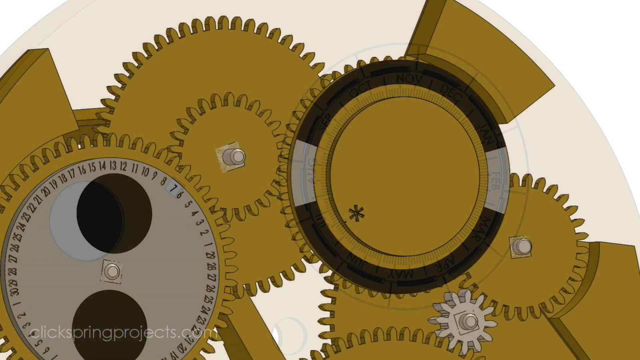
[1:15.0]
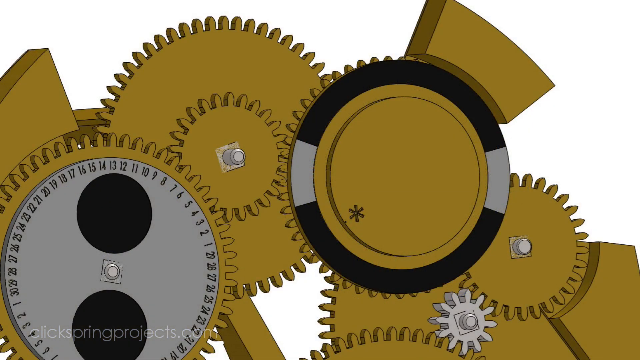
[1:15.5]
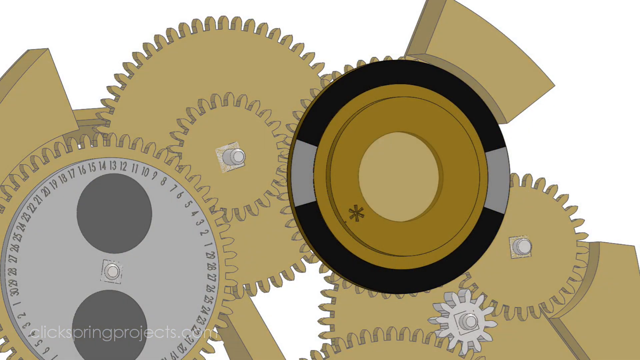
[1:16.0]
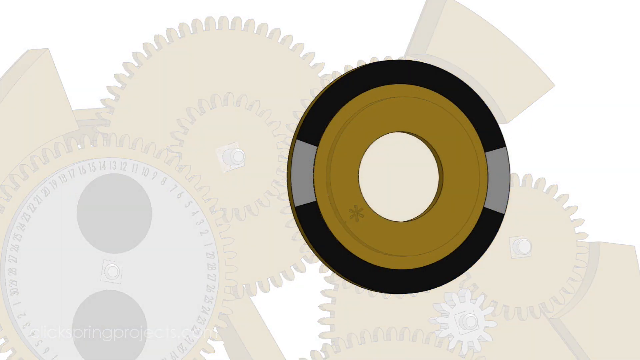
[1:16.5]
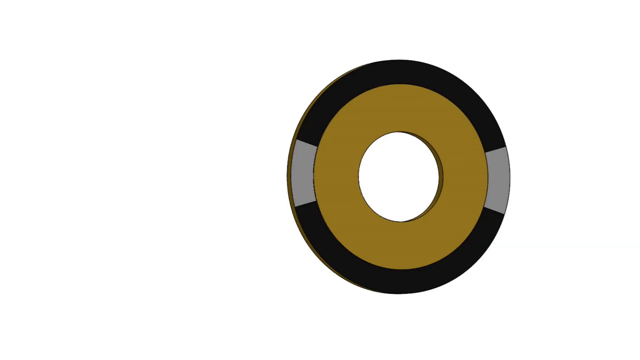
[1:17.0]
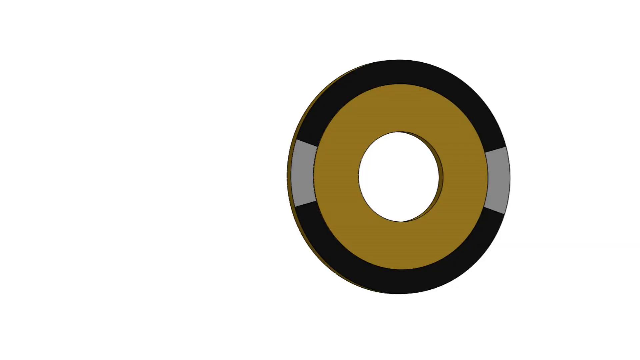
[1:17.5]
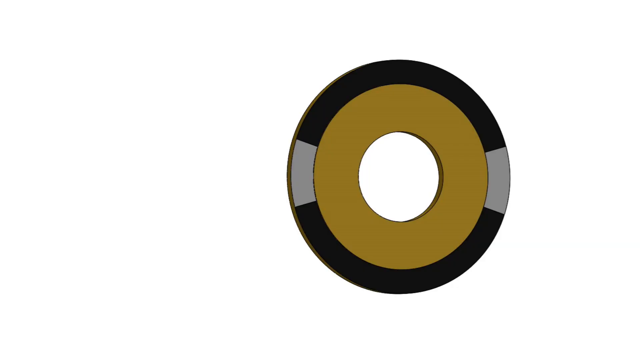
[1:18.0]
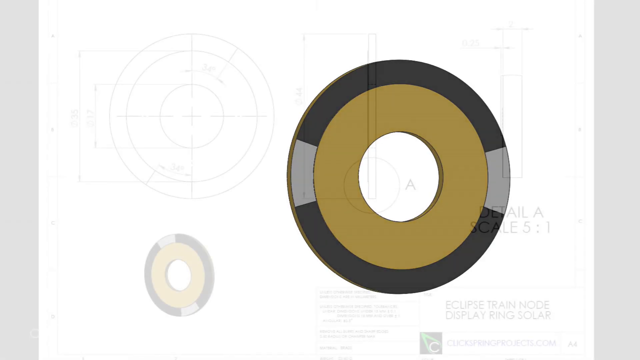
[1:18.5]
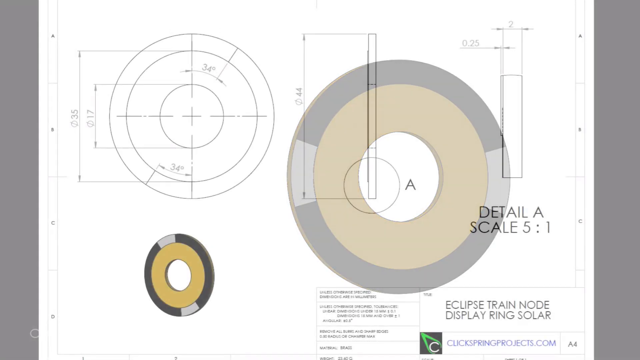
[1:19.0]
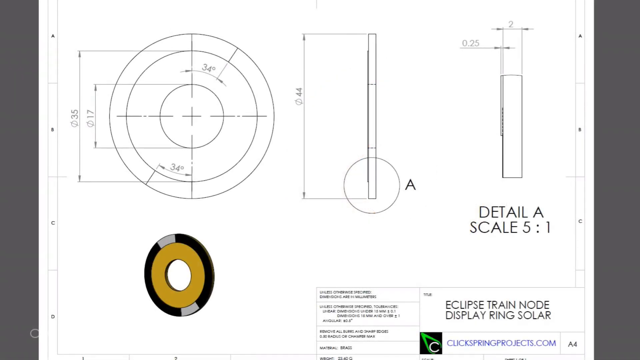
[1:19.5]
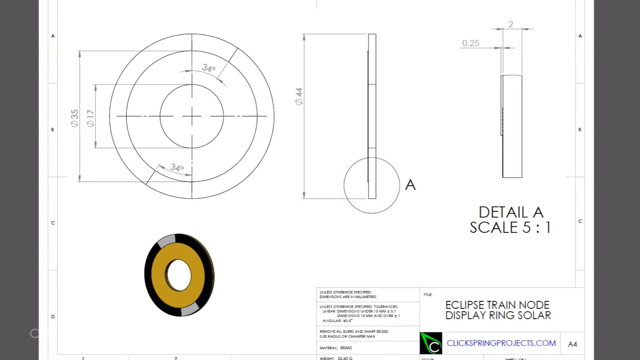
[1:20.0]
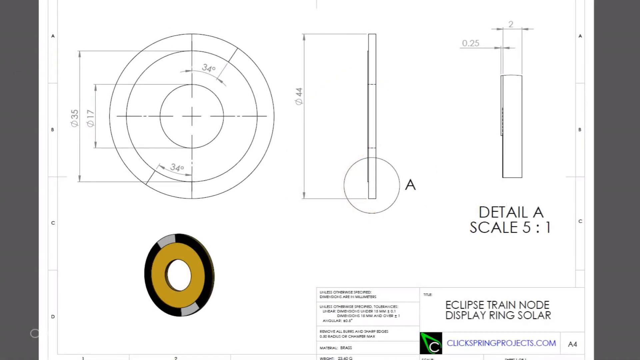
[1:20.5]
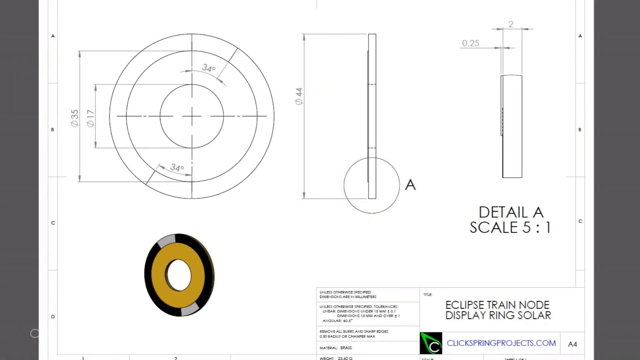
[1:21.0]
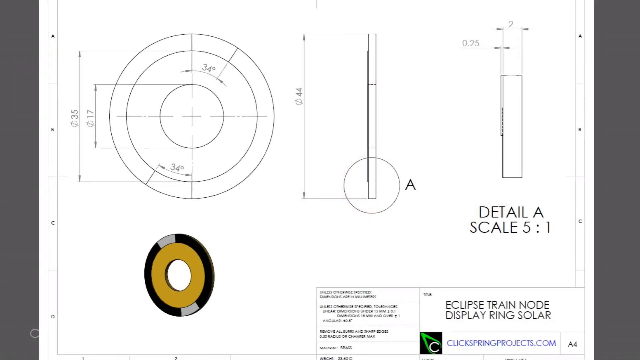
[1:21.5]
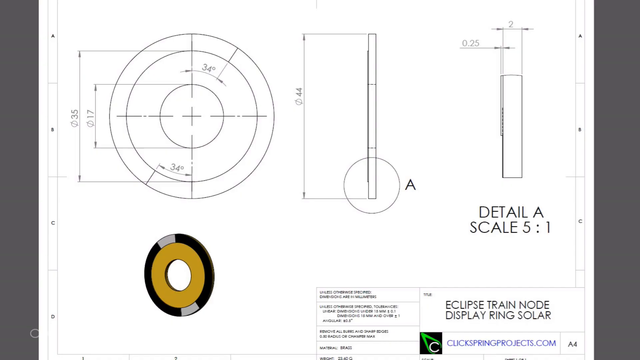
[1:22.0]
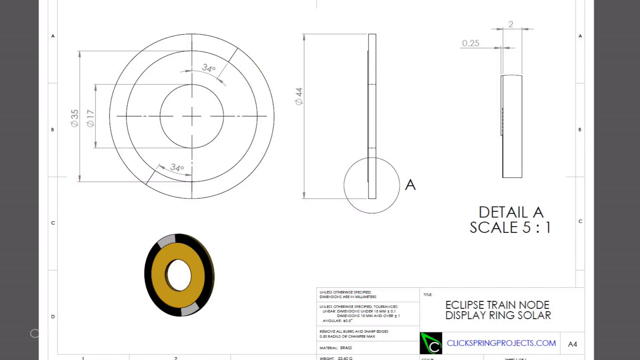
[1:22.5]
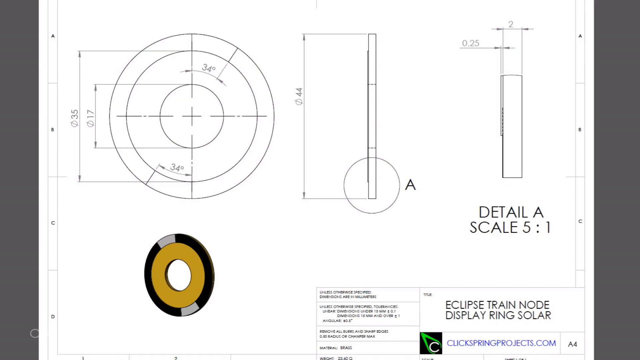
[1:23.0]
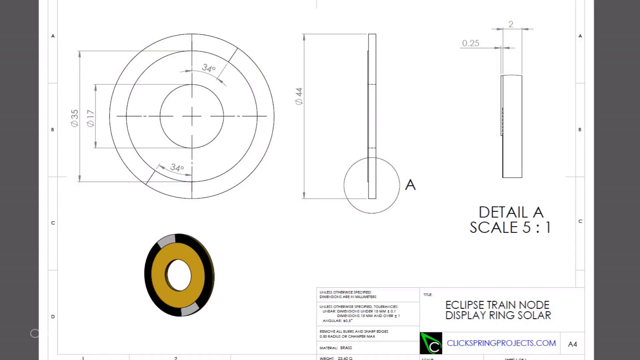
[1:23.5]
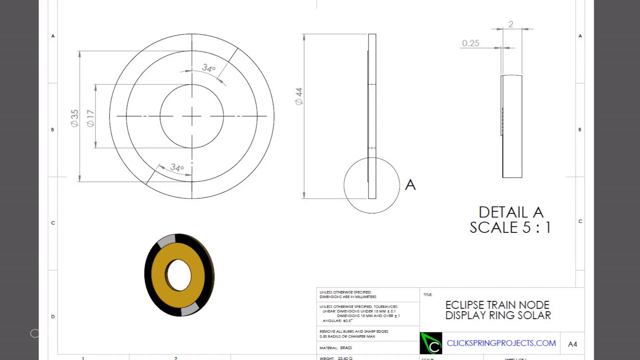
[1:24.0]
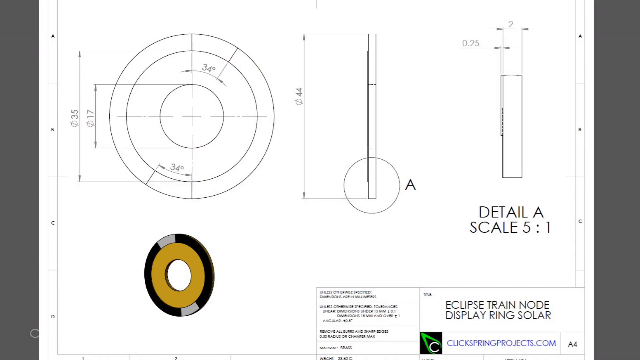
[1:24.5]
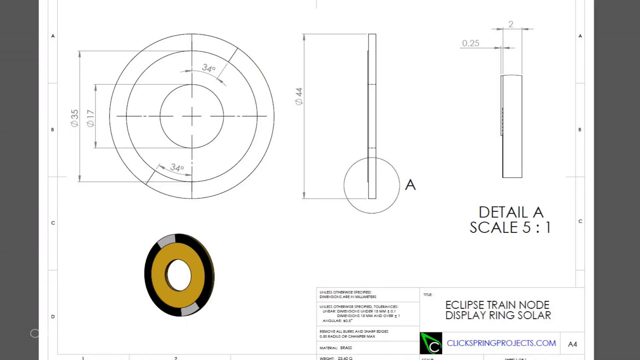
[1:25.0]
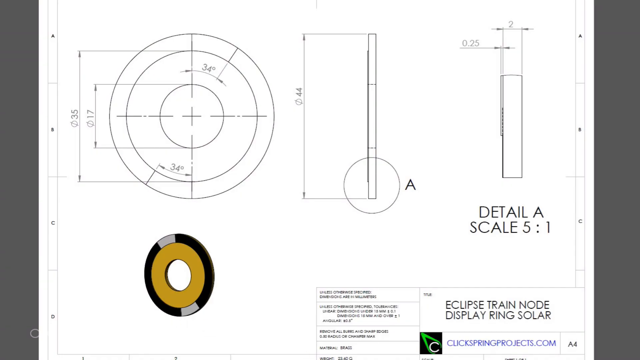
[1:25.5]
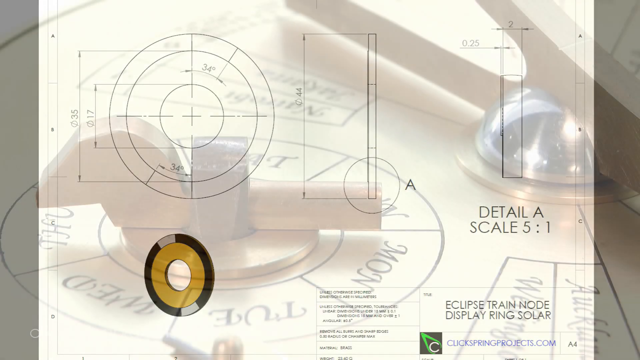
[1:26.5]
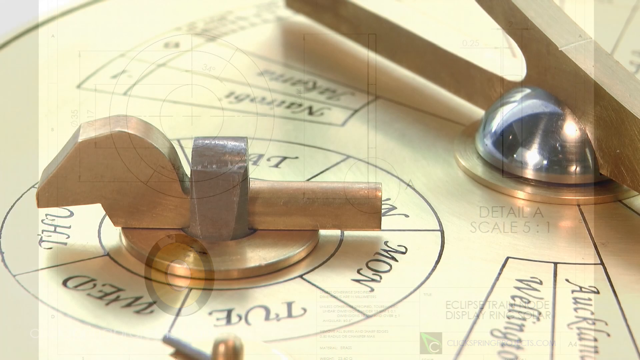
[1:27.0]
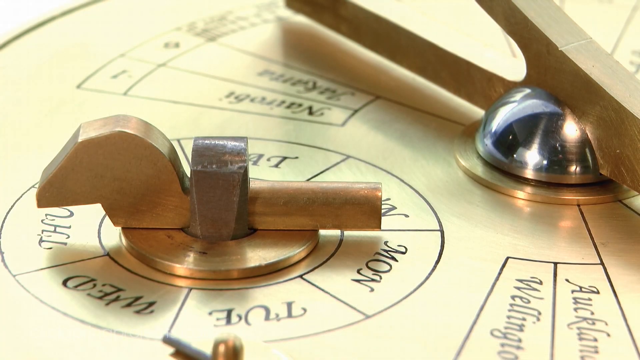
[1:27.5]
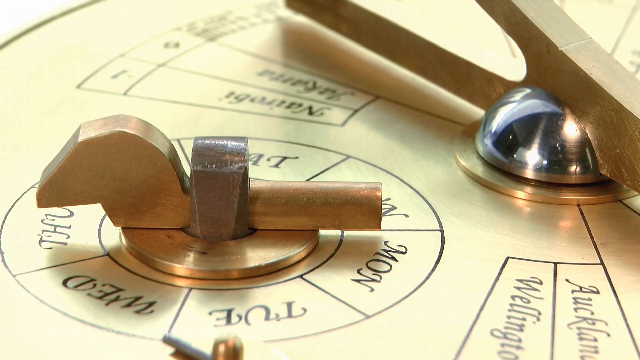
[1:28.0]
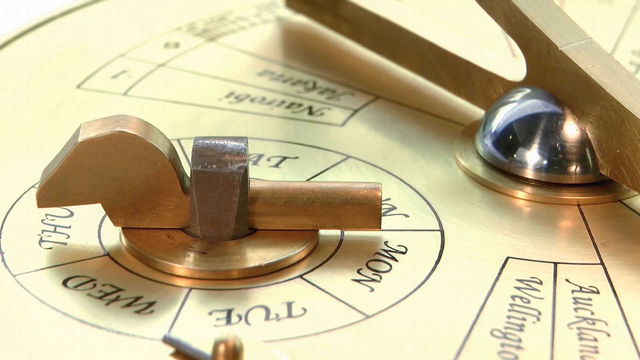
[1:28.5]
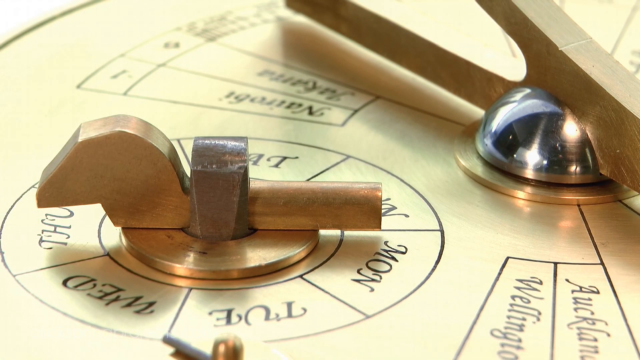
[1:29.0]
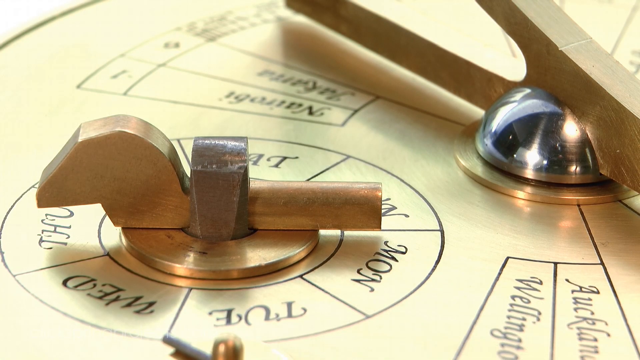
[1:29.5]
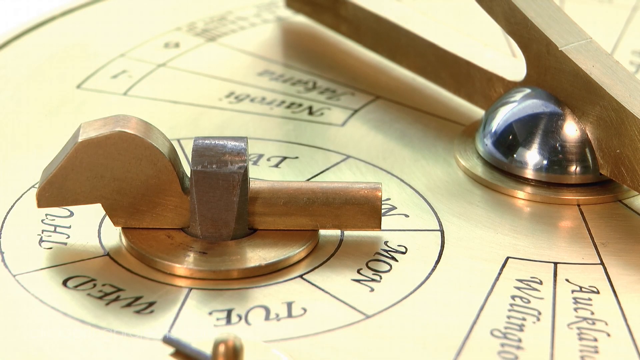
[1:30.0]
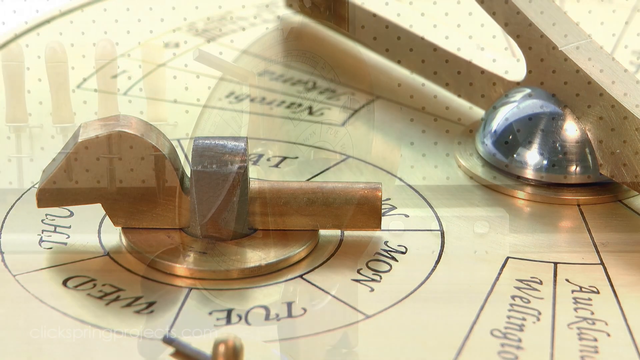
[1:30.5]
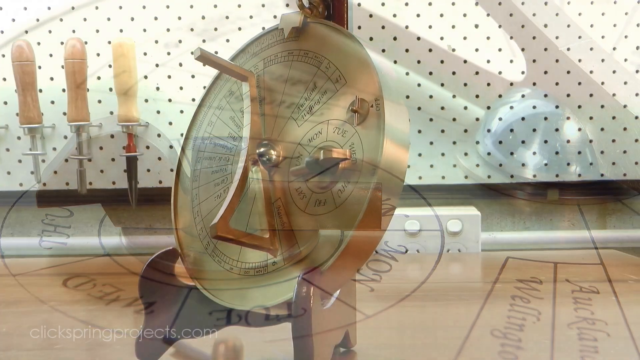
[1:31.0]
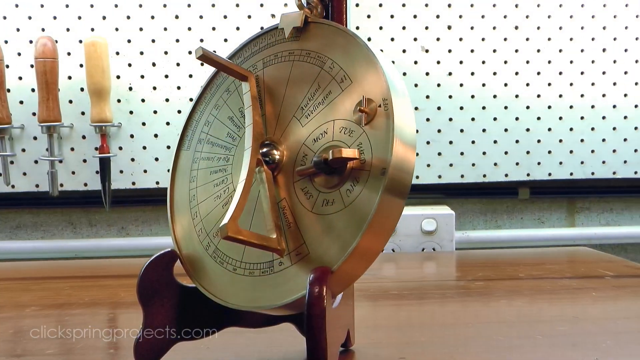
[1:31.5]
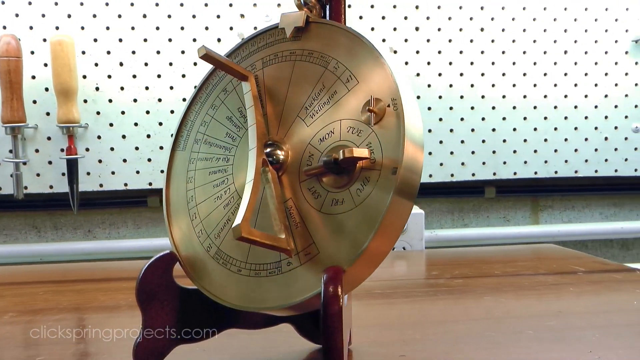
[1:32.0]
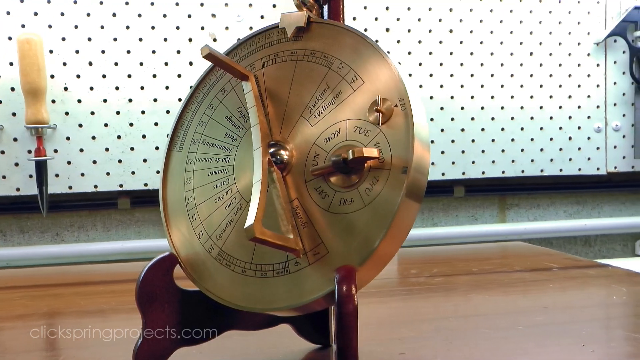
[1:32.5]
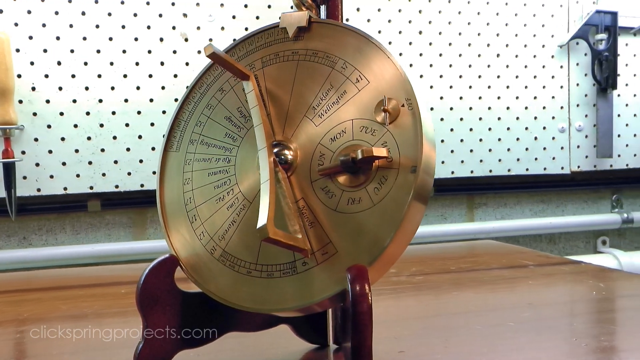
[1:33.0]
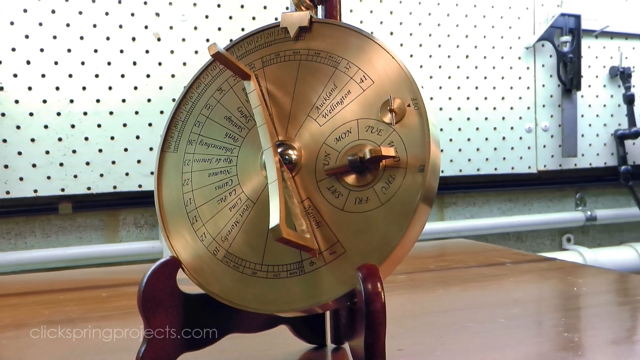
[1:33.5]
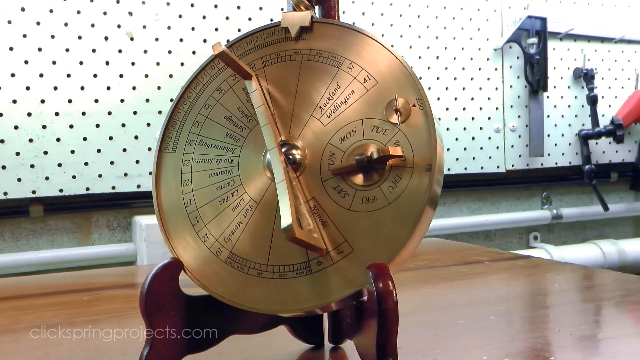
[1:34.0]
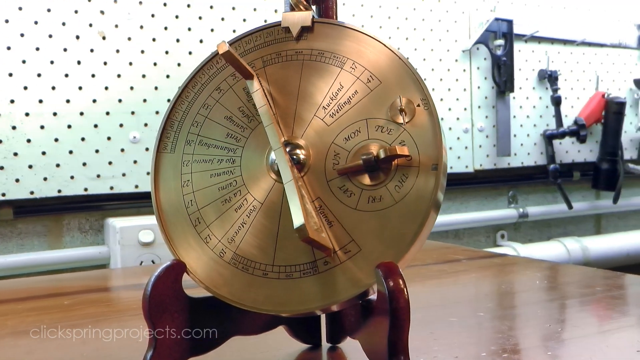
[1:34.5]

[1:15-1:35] The inner workings of the gold Byzantine sundial calendar are shown; it appears to work almost like a clock in the way it turns. A detailed view shows the scaling of the object, and another view shows the days of the week and the locations. Notes show some of the details used to put together the "Eclipse Train Node" and "Display Ring Solar", after which a panoramic view of the calendar is shown again.